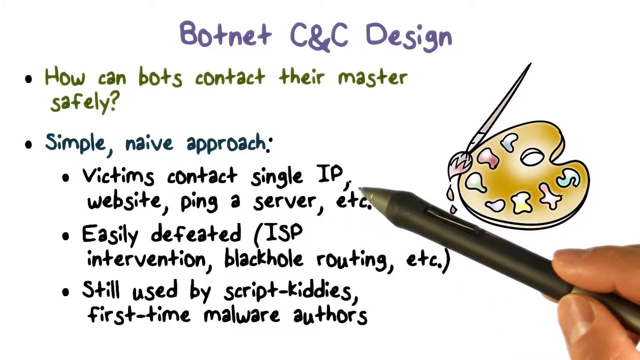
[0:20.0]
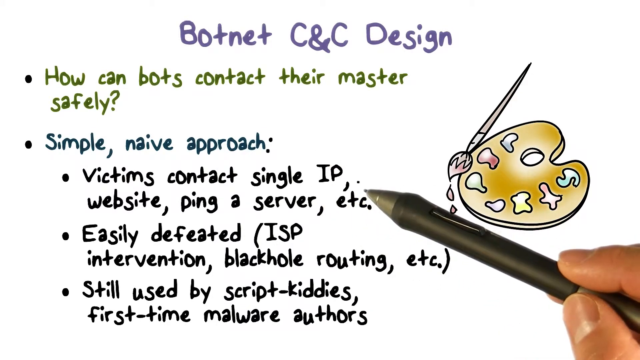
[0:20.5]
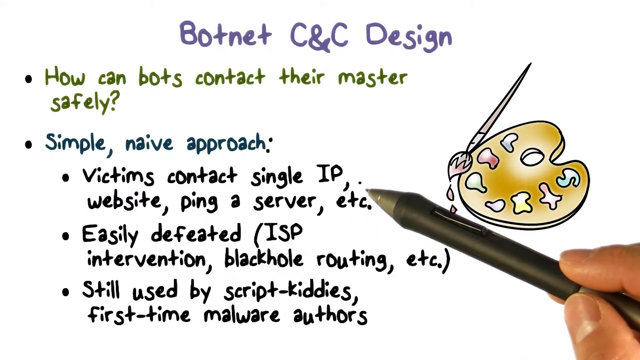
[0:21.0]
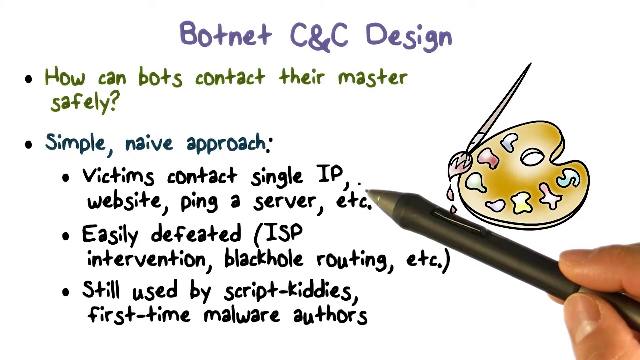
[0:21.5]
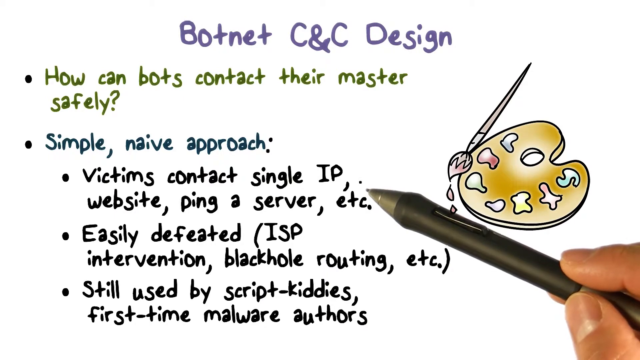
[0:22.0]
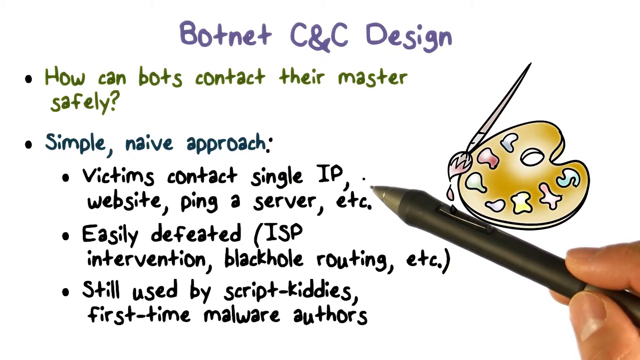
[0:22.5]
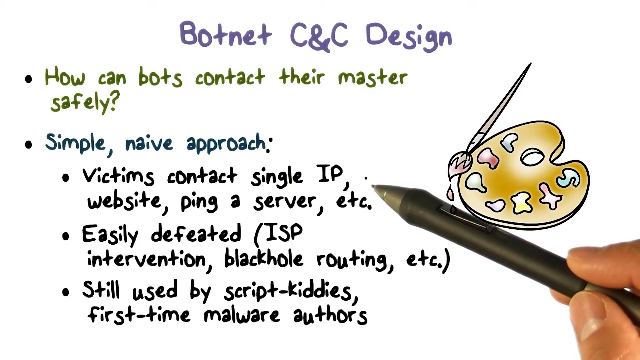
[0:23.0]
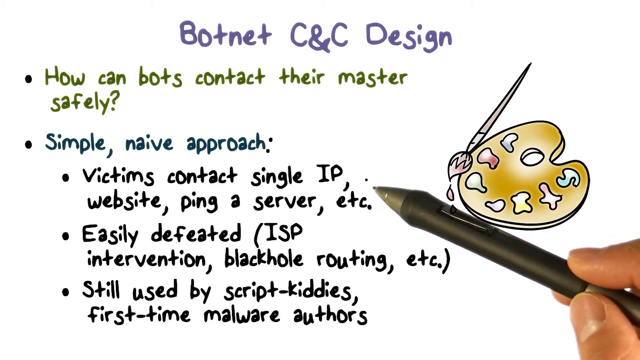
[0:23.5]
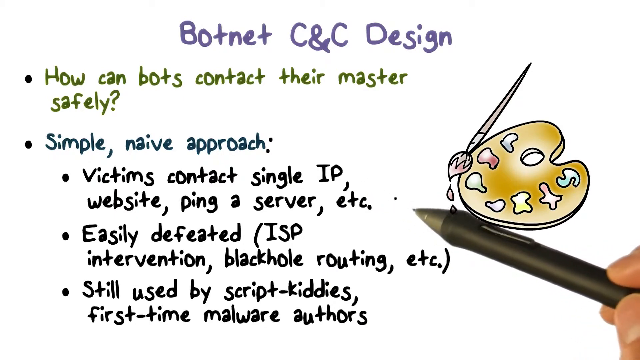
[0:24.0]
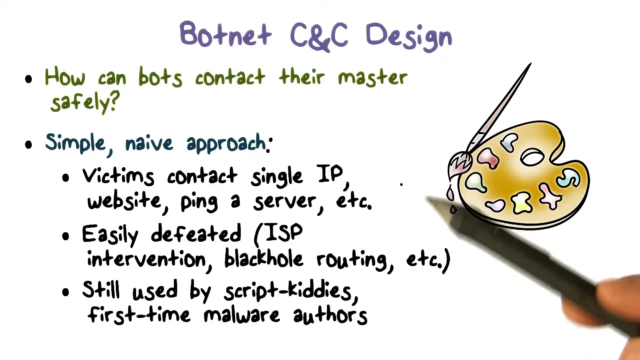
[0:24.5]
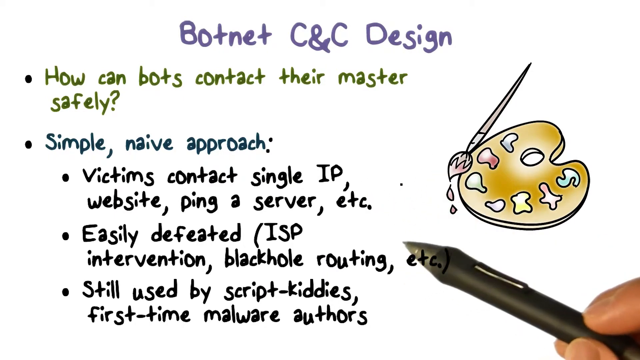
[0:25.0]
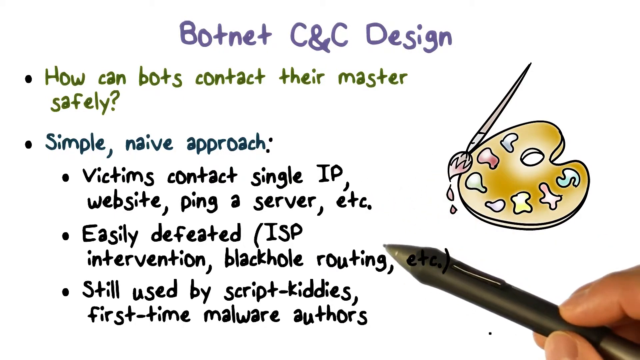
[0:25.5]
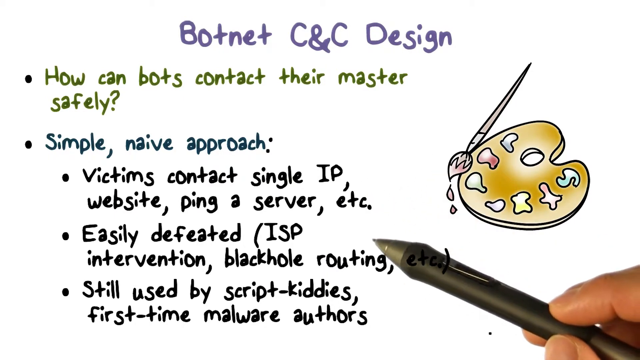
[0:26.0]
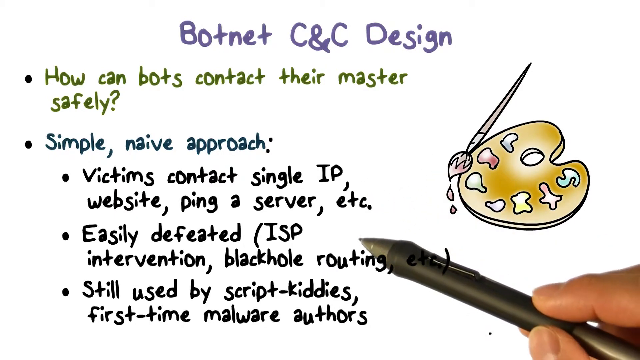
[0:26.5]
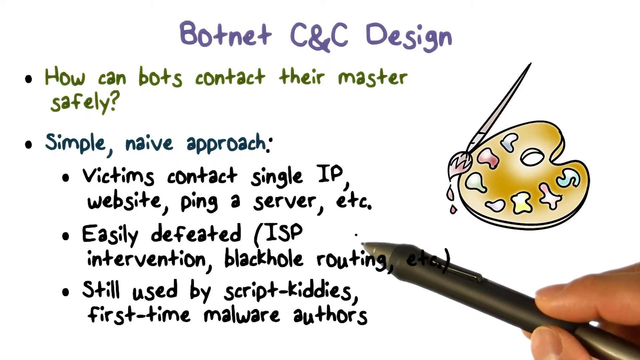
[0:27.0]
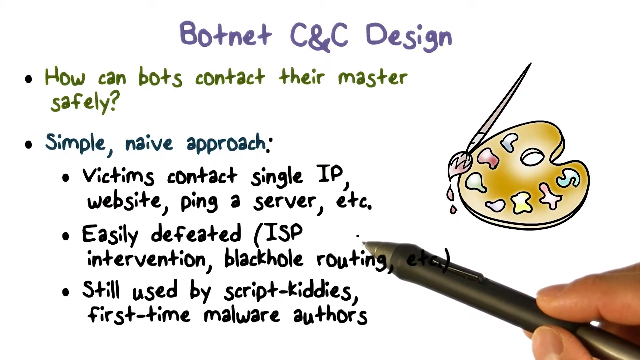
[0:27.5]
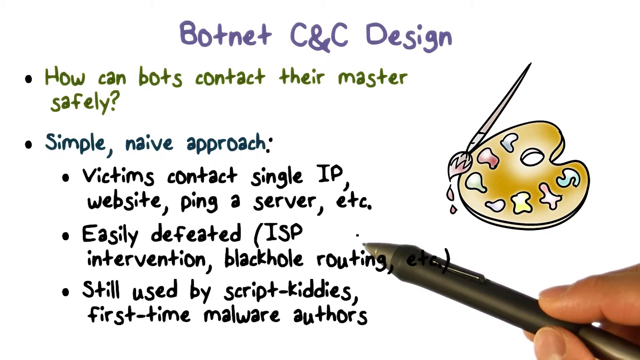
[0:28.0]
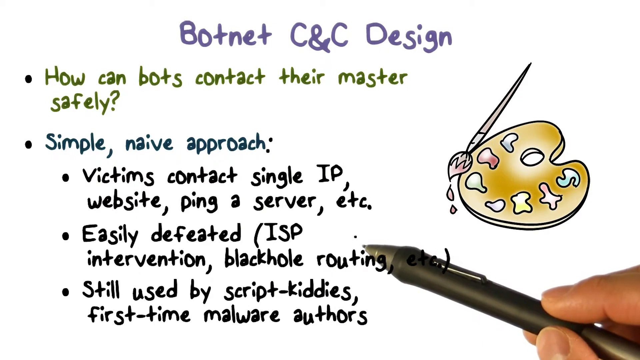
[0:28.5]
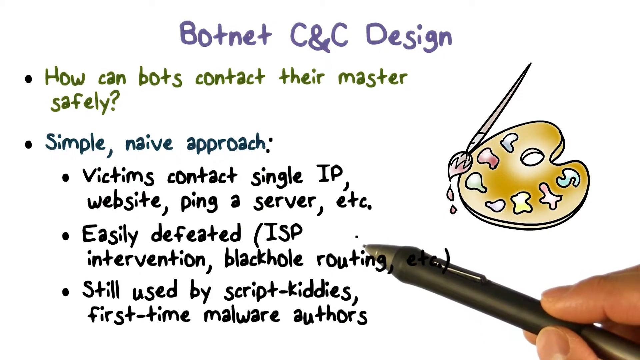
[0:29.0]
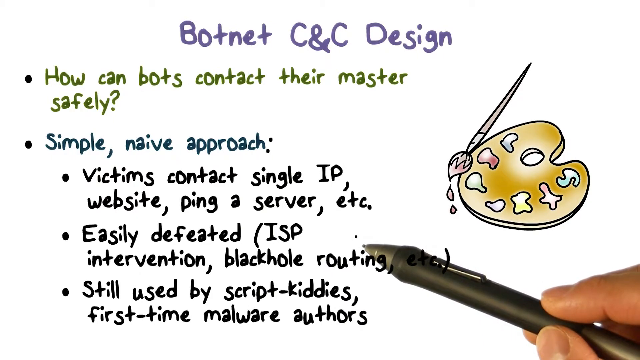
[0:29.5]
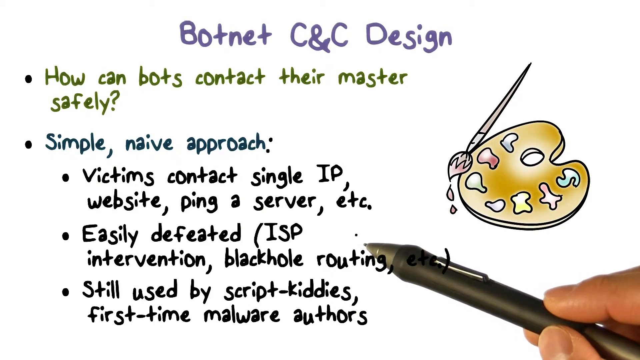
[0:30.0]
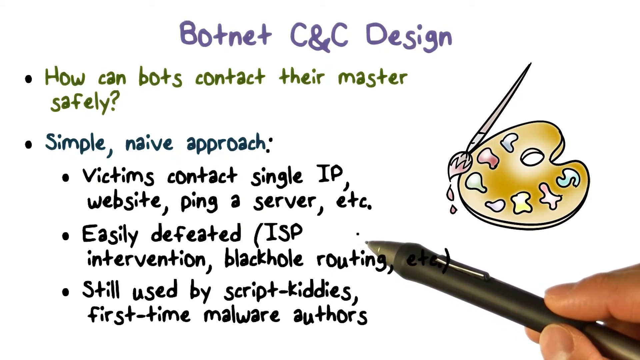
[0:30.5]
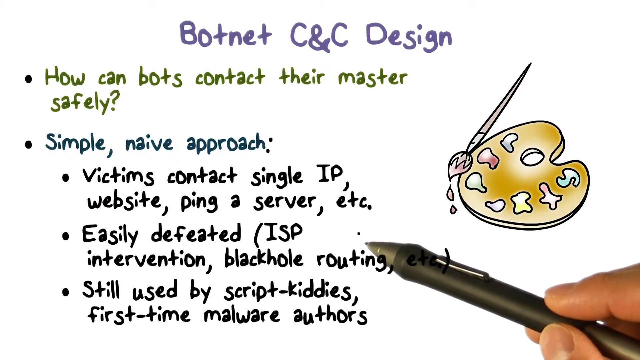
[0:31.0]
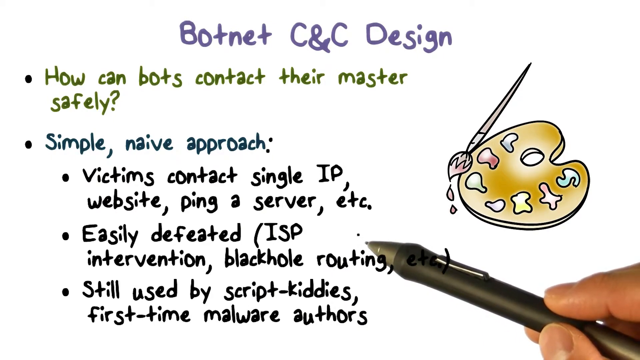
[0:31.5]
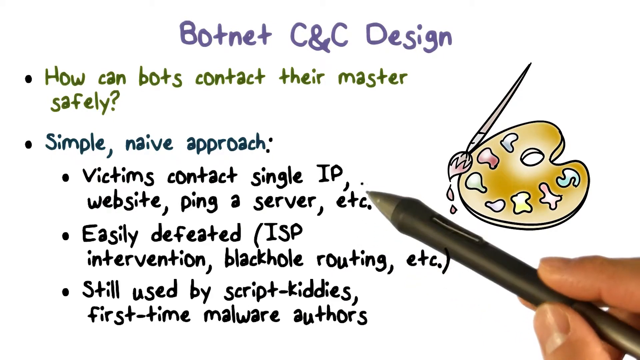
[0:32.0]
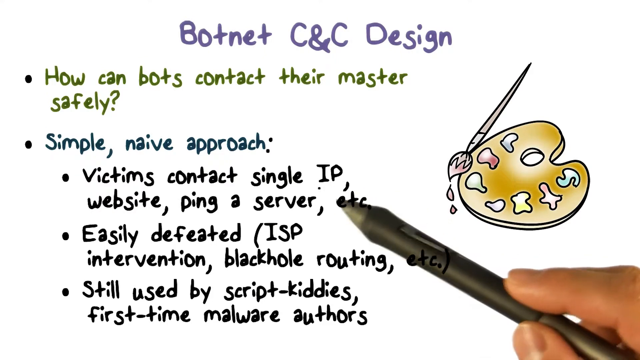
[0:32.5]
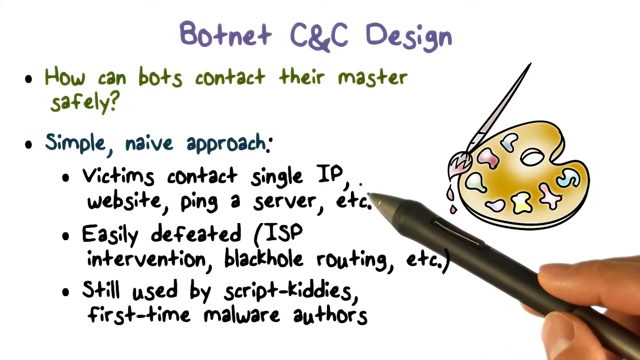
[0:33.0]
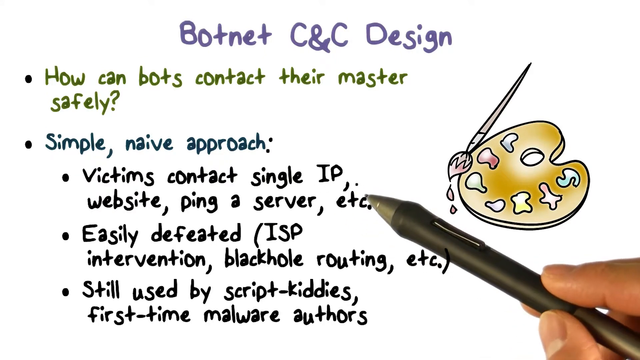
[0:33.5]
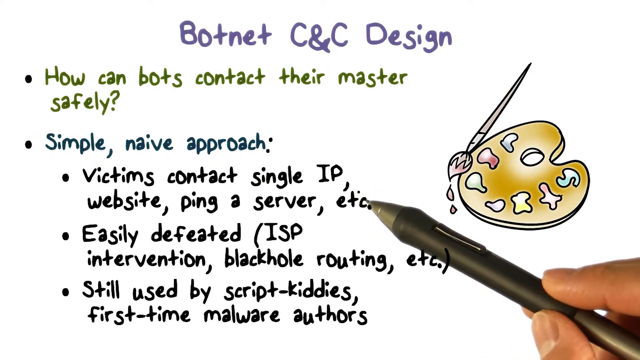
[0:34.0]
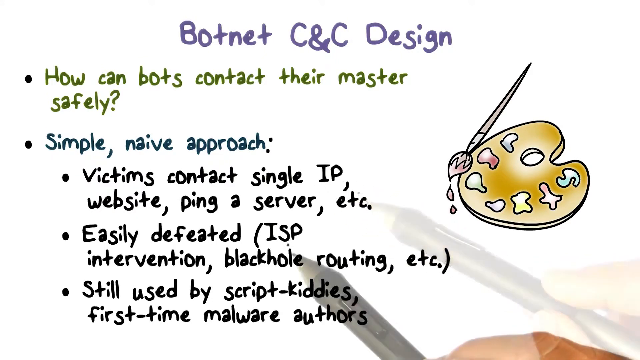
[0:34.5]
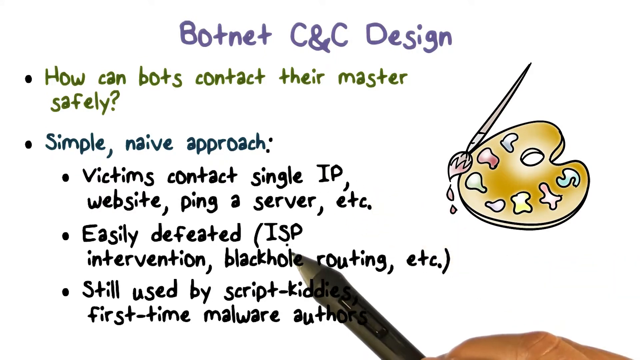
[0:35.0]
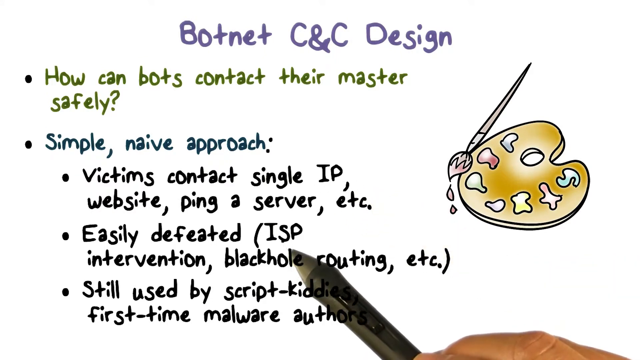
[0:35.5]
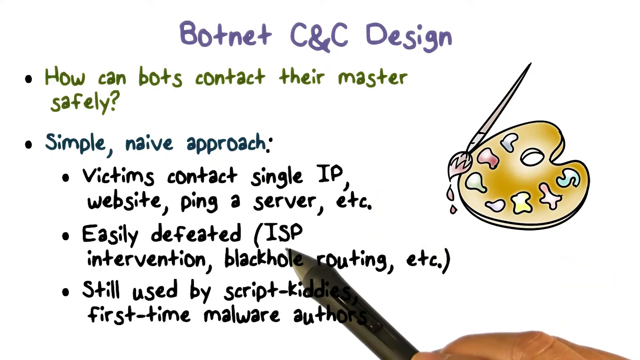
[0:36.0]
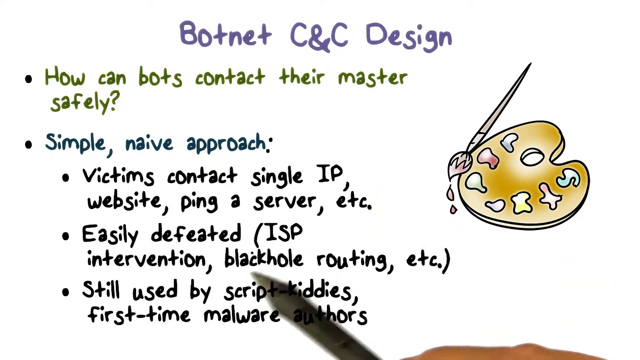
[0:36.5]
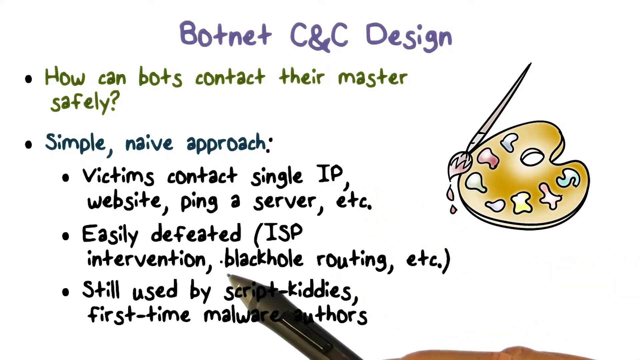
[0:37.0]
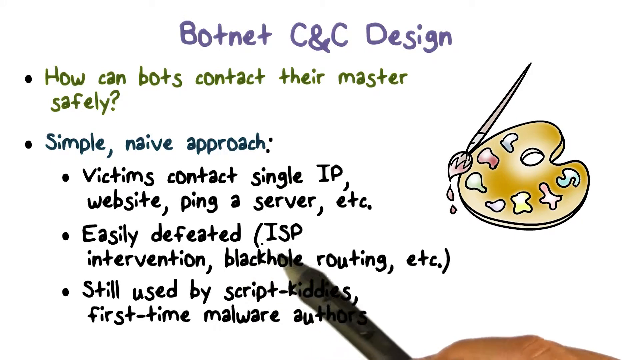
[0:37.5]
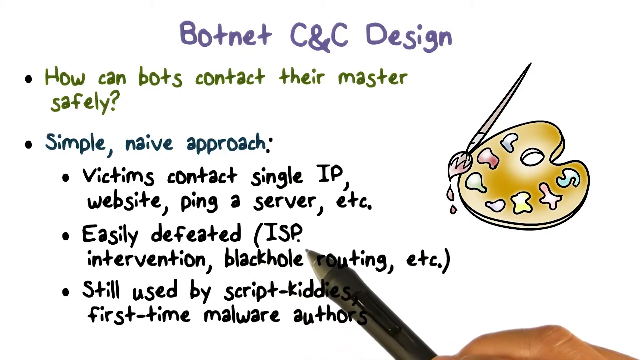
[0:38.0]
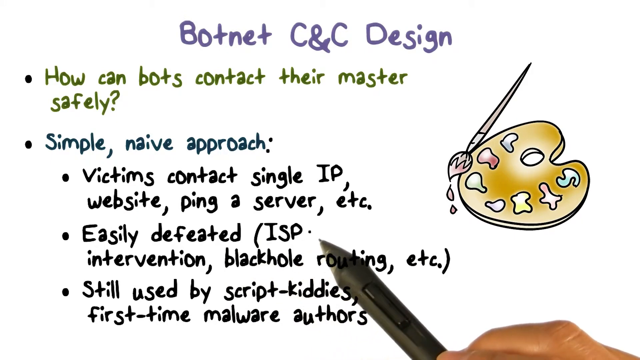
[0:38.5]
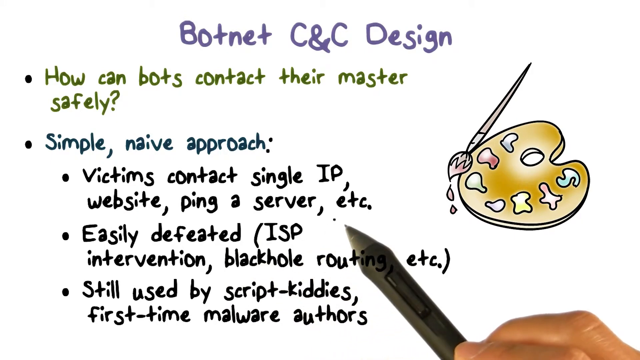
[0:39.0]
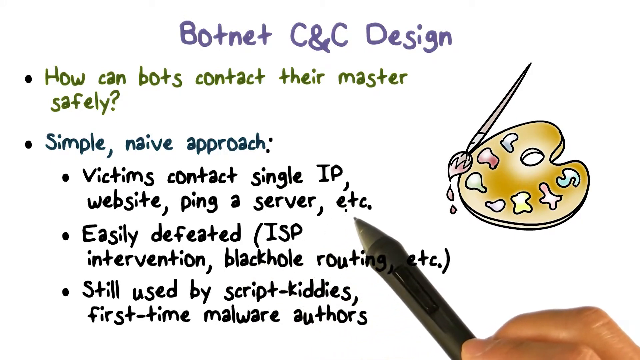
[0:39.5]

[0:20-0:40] A presentation-like slide reads "Botnet CNC design" in blue text. Below it, what appears to be the first point reads in green text "how can bots contact their masters safely?" On the right side of the screen is a cartoonish image of an easel and a brush, with different paint colors on the easel and the brush in a red color. Fingers and the pen remain in the bottom right corner, with the pen now stretching across the screen, covering the information. It moves over a new point in blue text reading "Simple Naive Approach." Below it are three black bullet points: "Victim Contact Single IP Website, Ping as Server, etc.," "Easily Defeated ISP Intervention, Black Hole Routing, etc.," and "Still Used by Script Kitties, First Time Malware Authors." The pen continues to move across these three bullet points, highlighting different ones.